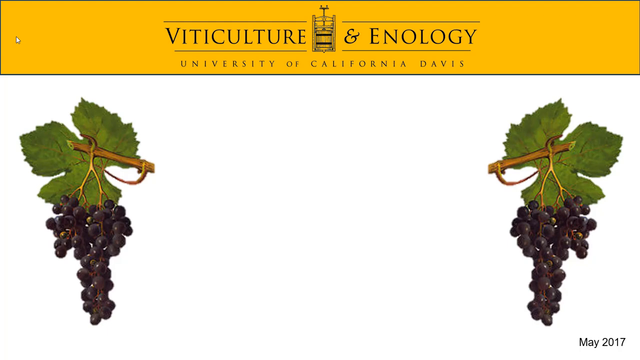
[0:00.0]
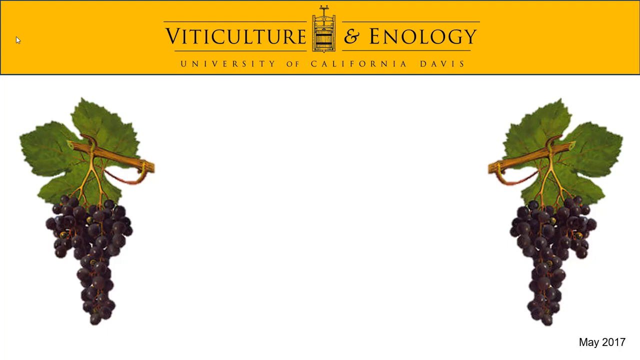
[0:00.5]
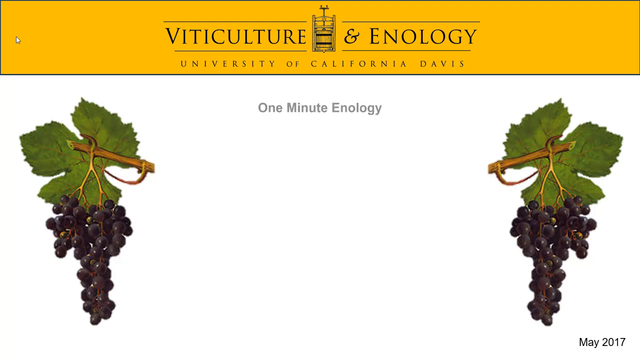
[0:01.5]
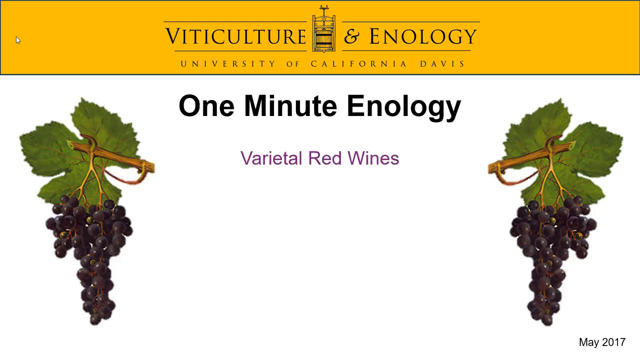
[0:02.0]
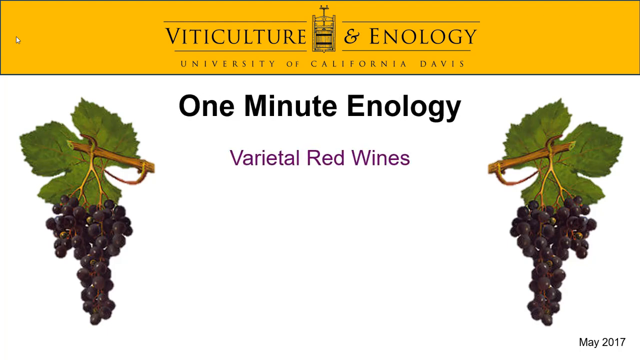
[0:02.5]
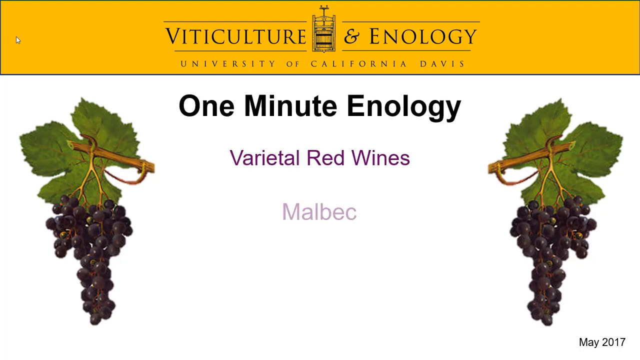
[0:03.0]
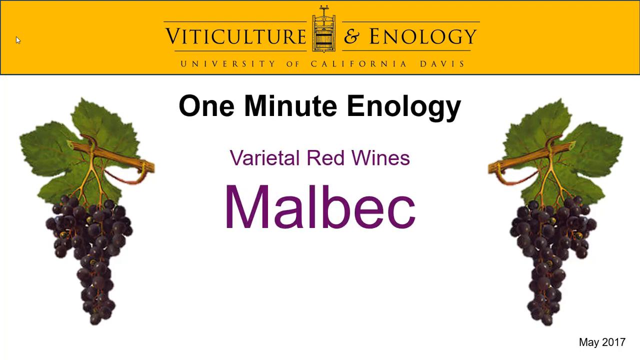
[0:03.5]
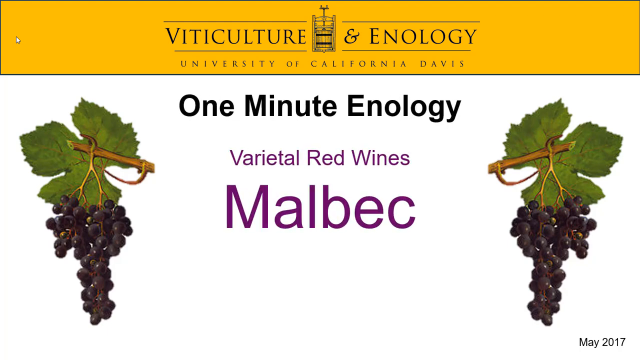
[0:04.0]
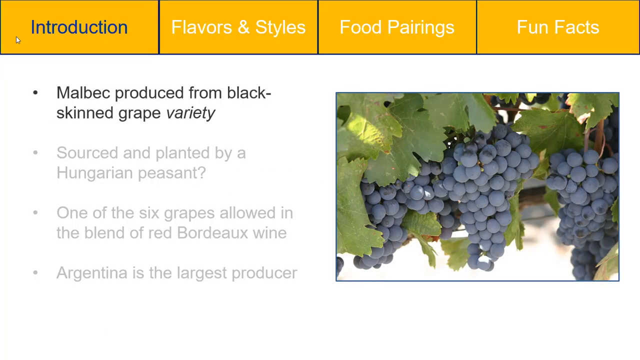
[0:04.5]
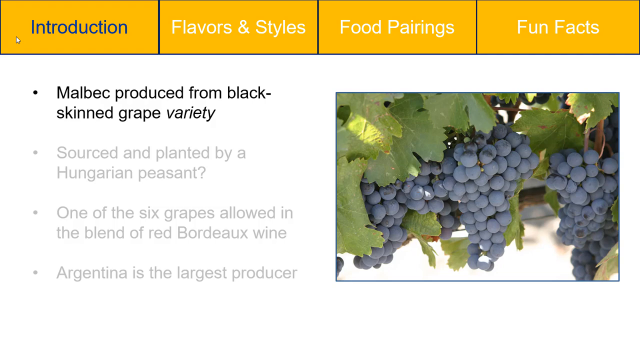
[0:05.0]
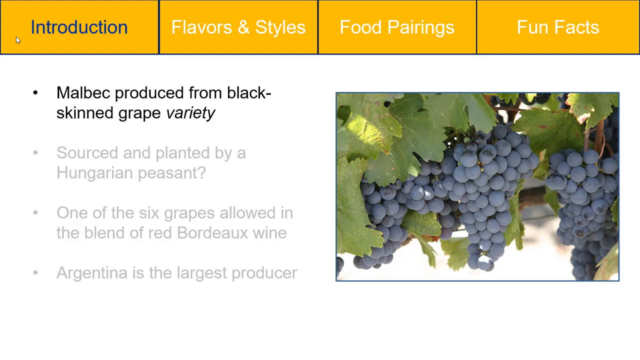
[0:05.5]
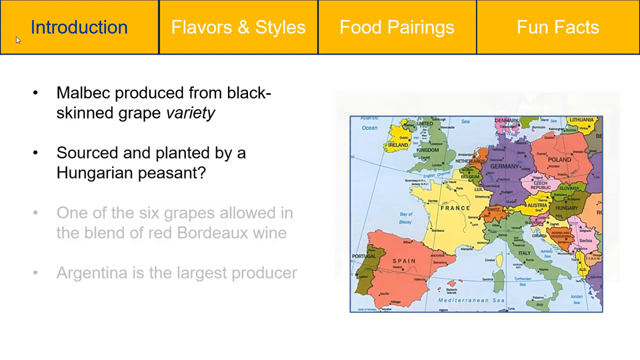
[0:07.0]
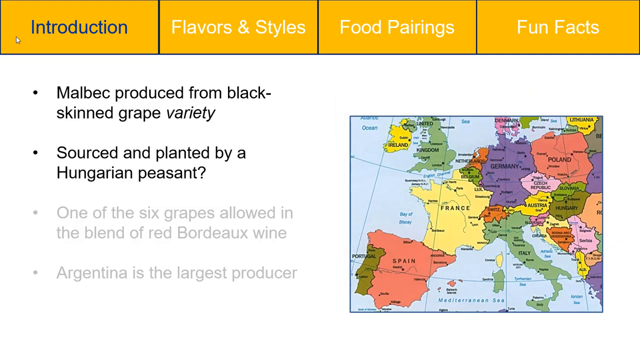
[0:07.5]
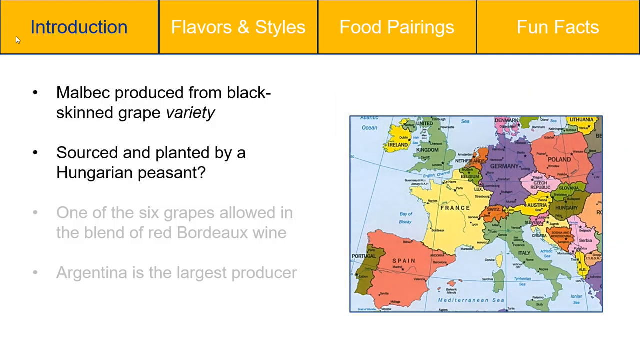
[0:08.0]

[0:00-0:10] A white background appears with a yellow bar at the top showing "Viticulture and oenology University of California Davis." On the white screen below, each side has a branch with a leaf and some grapes hanging on it. Text then appears in the center reading "One minute oenology varietal red wines Malbec," with "One minute oenology" in black and the text below it in purple. The video then moves to another page with an introduction to the content, and a map on the right side of the screen shows Europe, with different colors representing the different countries of the continent.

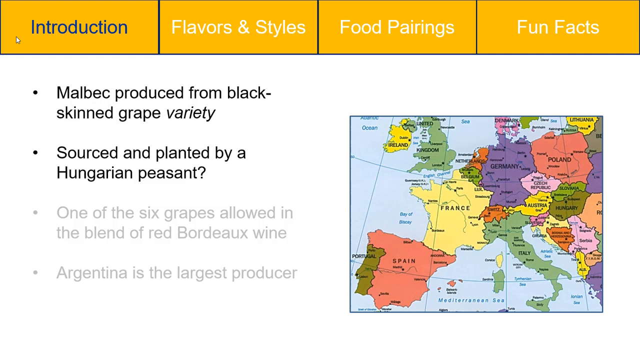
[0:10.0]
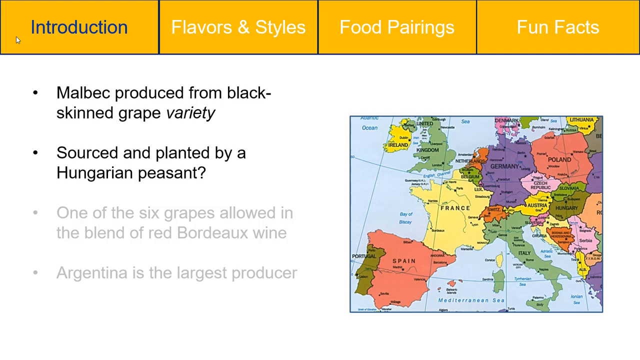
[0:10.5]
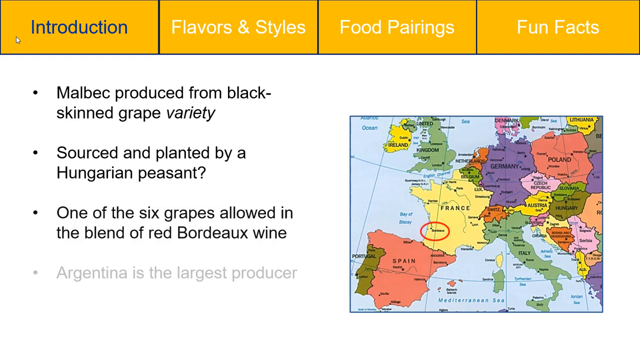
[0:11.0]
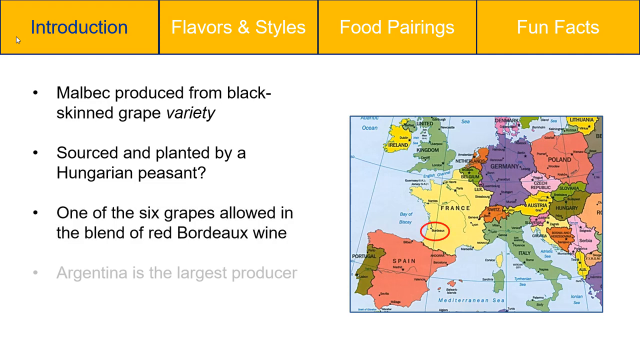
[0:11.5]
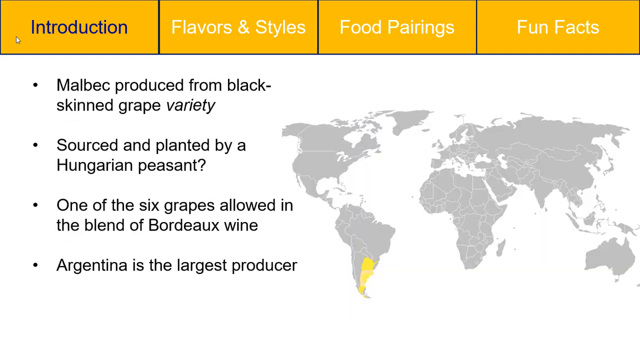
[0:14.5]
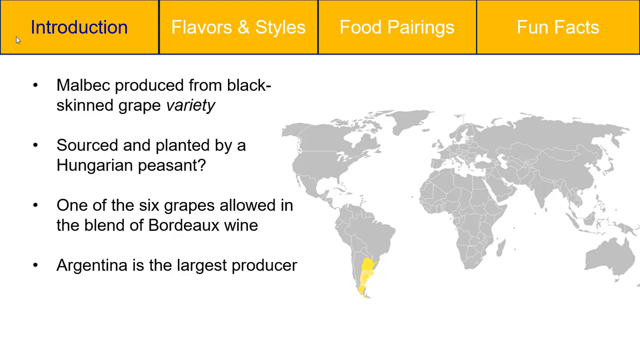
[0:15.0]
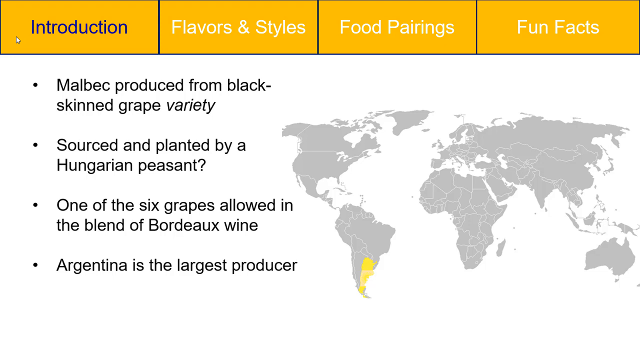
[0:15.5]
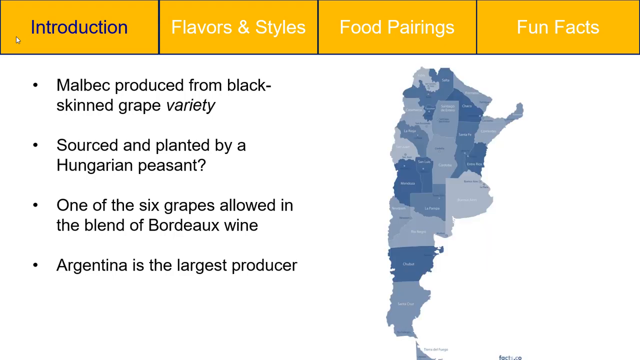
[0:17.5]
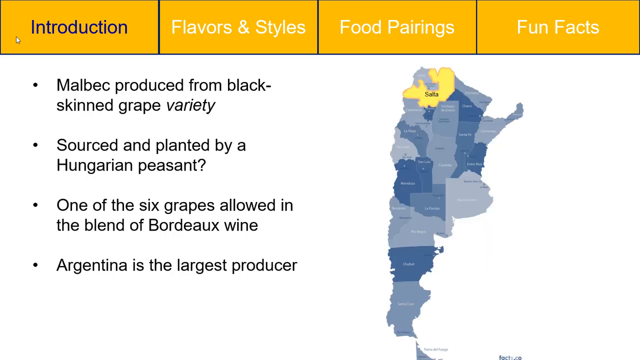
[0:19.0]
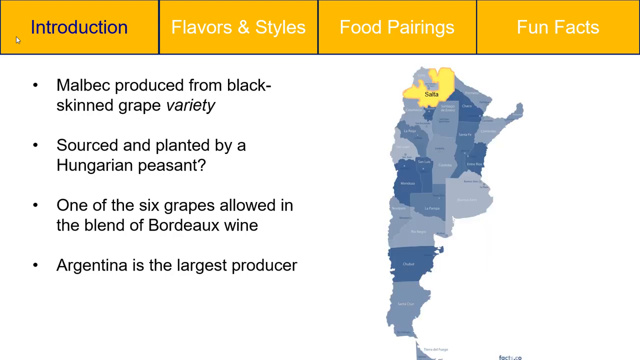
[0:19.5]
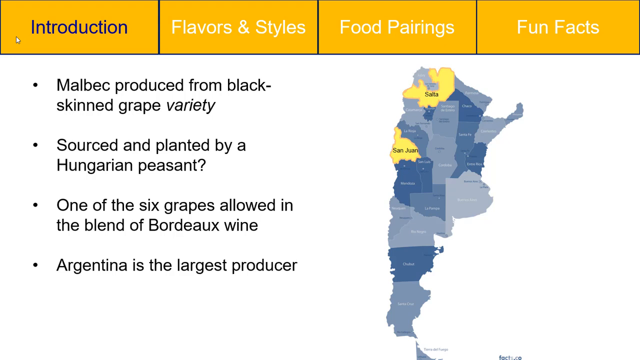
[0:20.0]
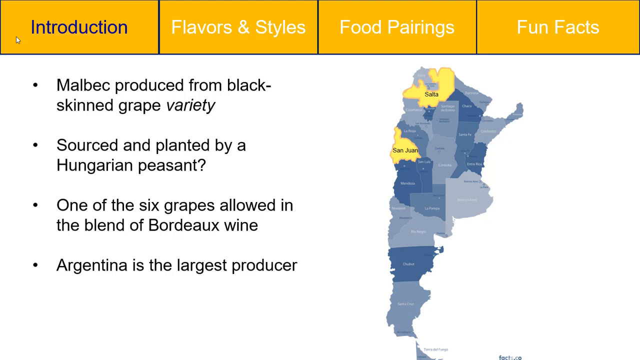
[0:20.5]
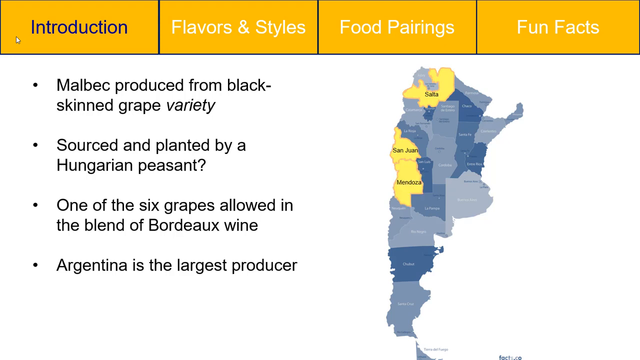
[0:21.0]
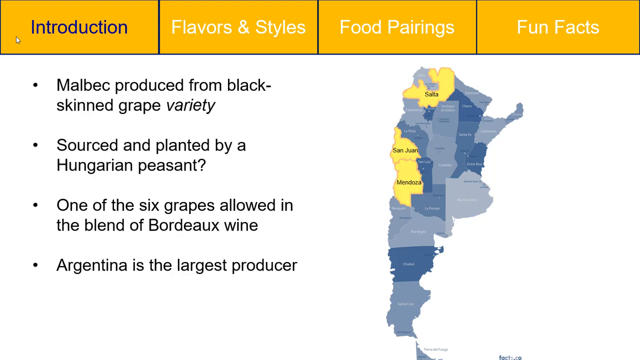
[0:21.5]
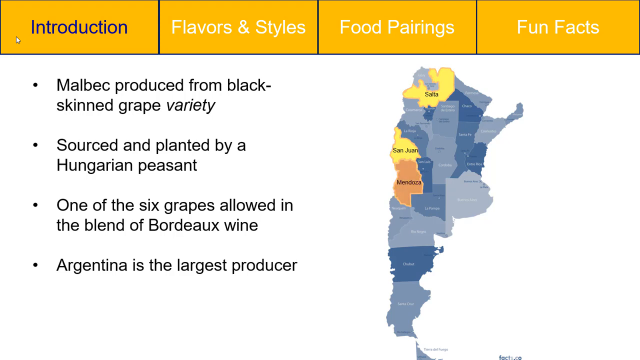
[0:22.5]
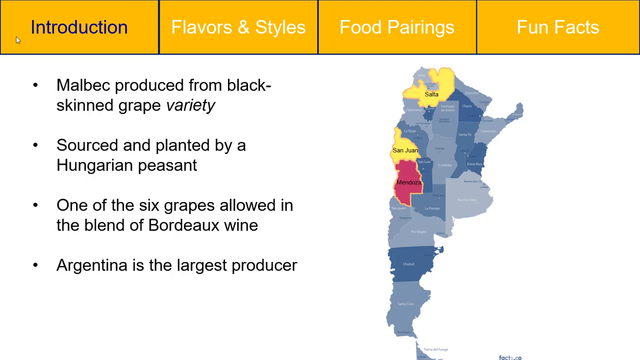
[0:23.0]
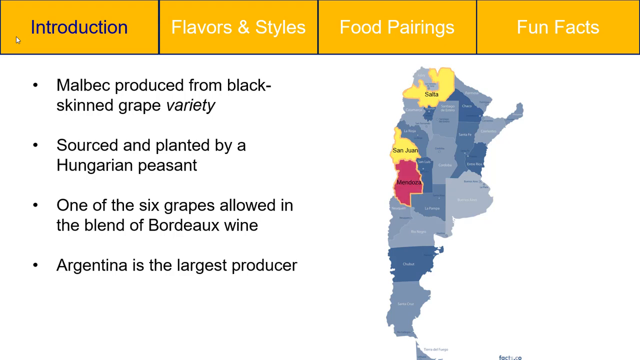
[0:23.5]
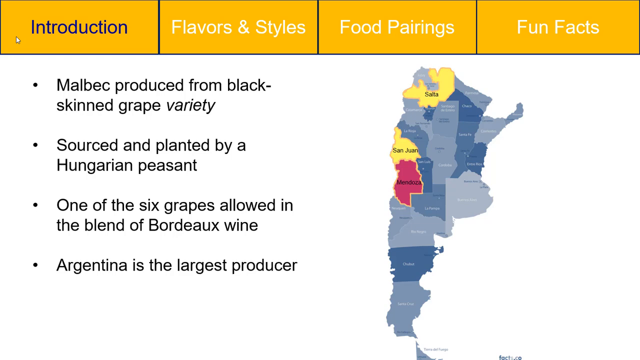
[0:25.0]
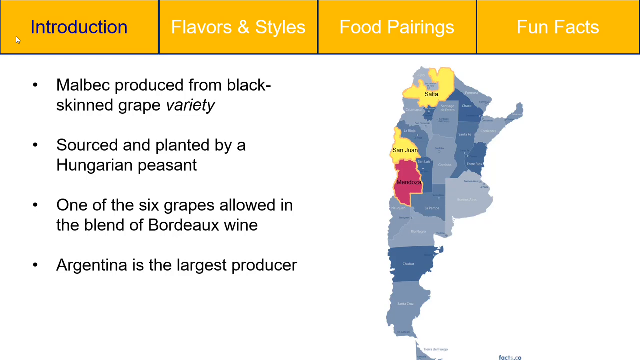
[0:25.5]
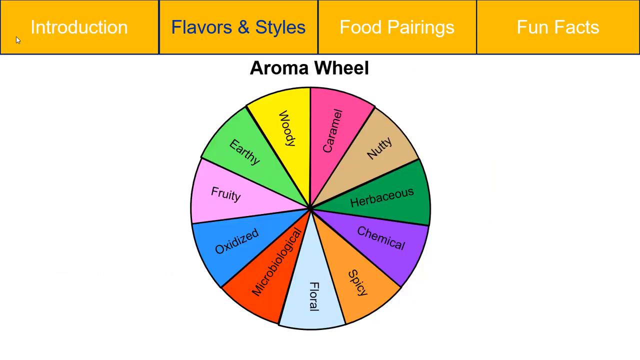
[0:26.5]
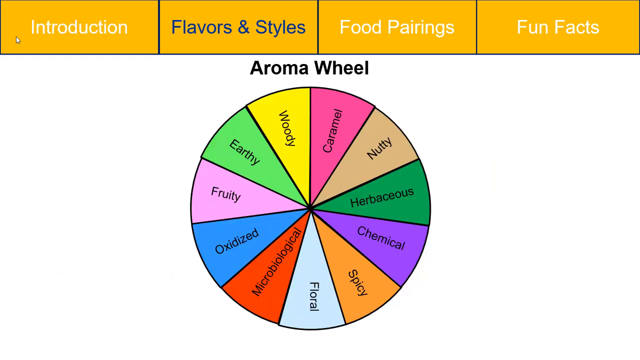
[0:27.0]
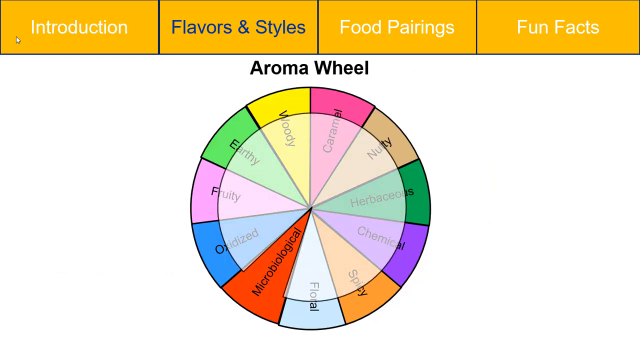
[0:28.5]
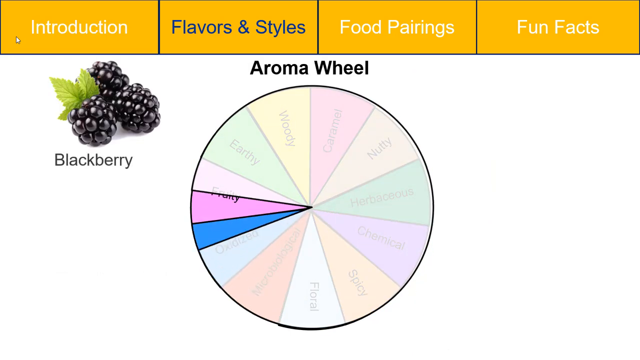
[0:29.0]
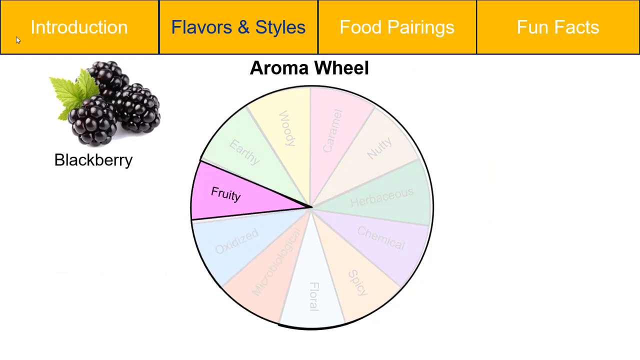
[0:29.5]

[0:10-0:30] The introduction continues with different points about it. On the right side of the screen the map disappears and a world map appears with all countries grayed out except Argentina, which is yellow. This map then disappears and another map on the right shows a zoomed-up view of Argentina, where cities such as Salta, San Juan and Mendoza light up. The screen then switches from the introduction to the next section, flavors and styles. A yellow bar at the top of the screen shows four topics: introduction, flavors and styles, food pairings, and fun facts. An aroma wheel in different colors appears on the screen and starts to spin, while items appear on the left, including a picture of blackberries and a picture of tobacco, both labeled underneath.